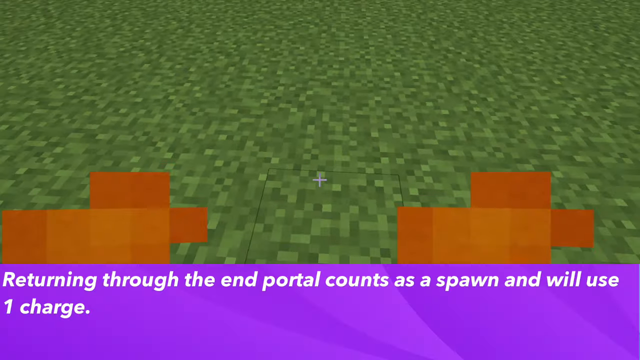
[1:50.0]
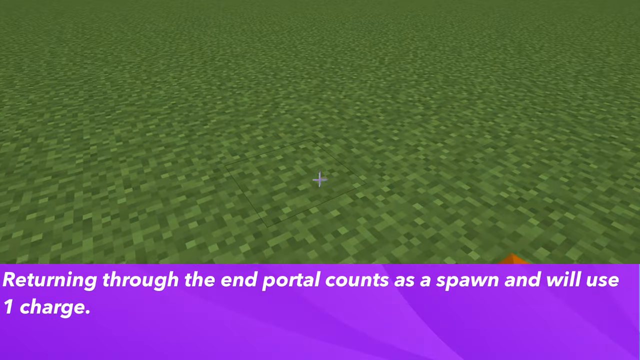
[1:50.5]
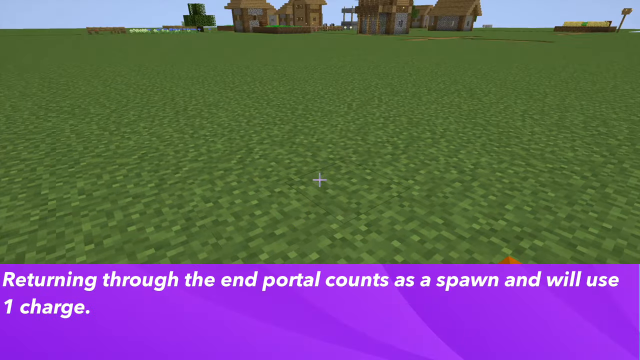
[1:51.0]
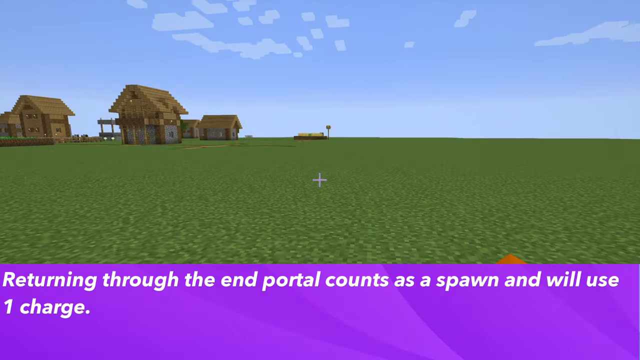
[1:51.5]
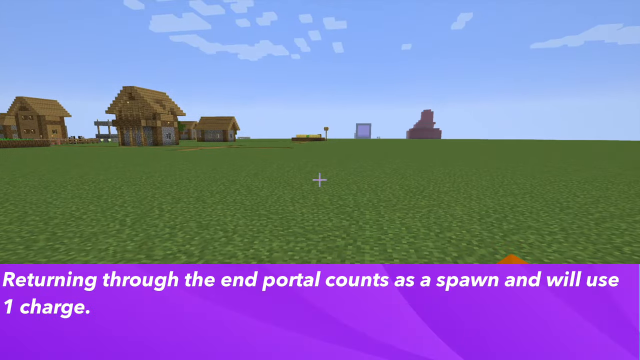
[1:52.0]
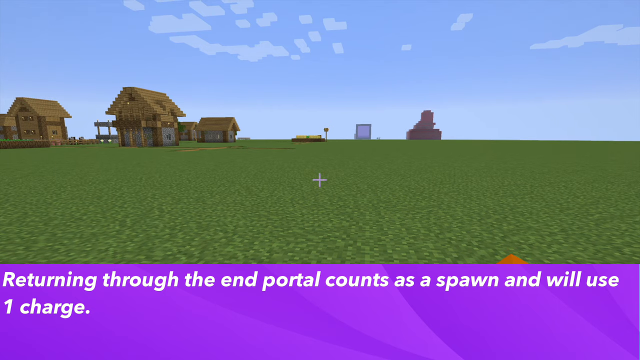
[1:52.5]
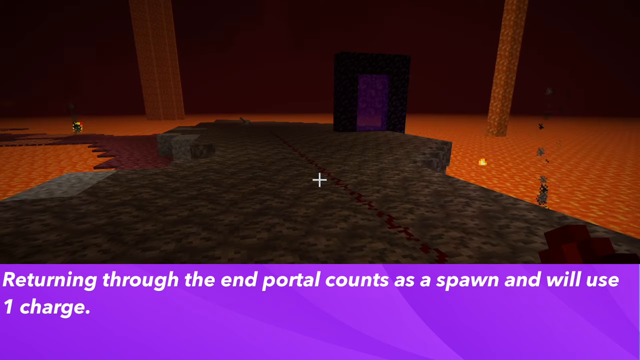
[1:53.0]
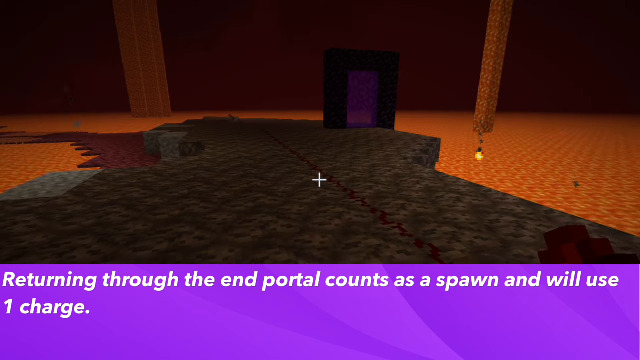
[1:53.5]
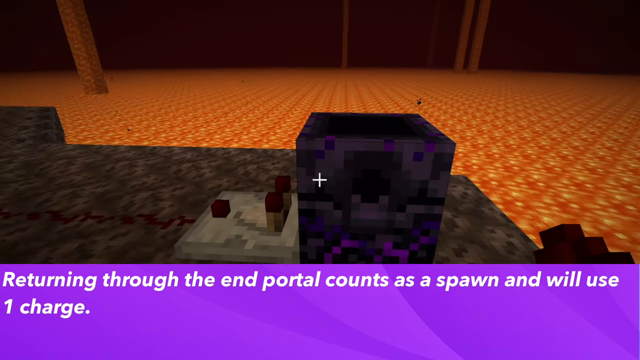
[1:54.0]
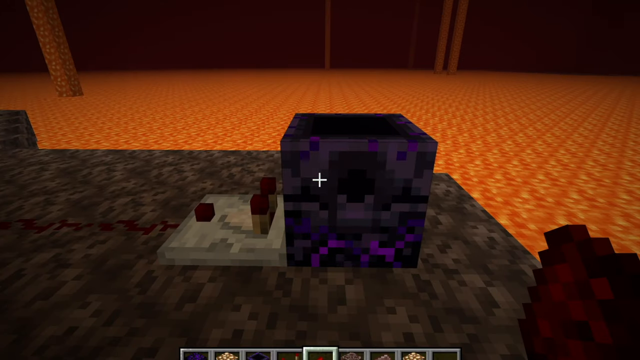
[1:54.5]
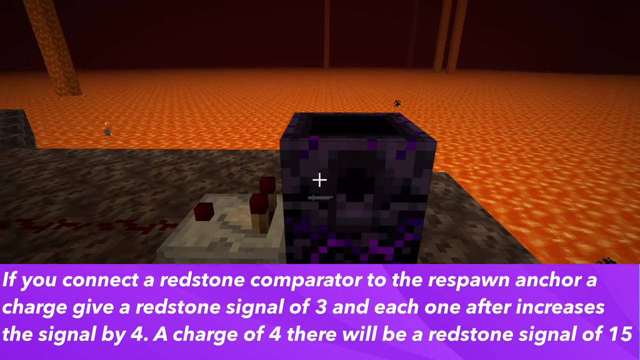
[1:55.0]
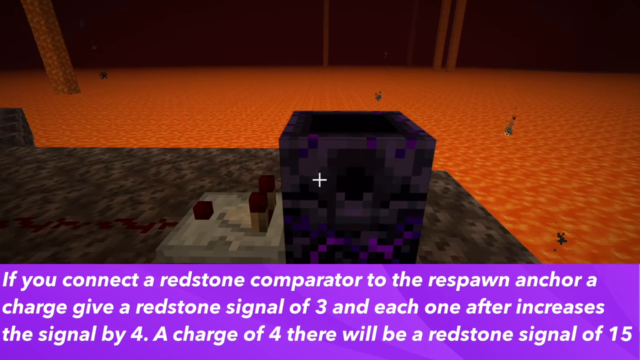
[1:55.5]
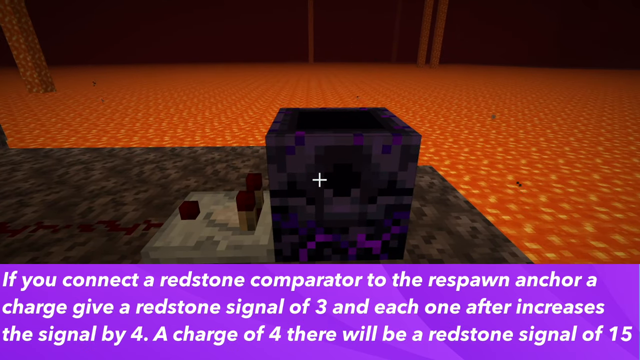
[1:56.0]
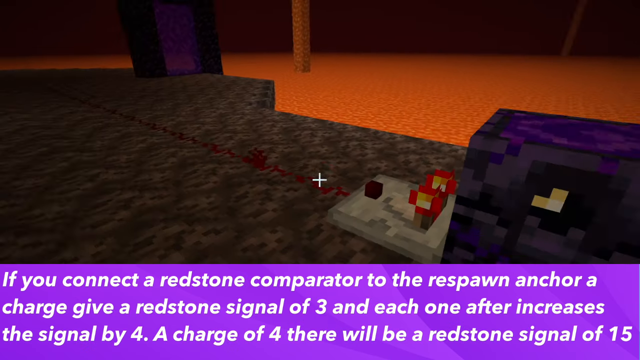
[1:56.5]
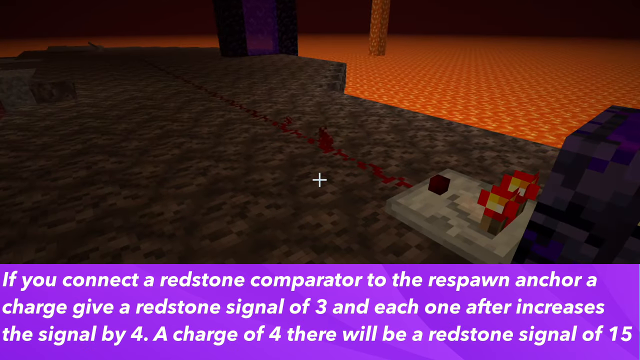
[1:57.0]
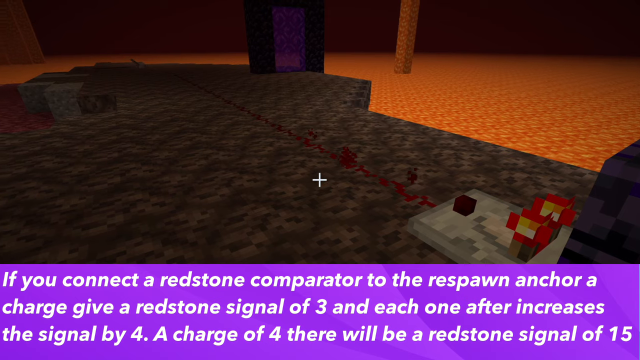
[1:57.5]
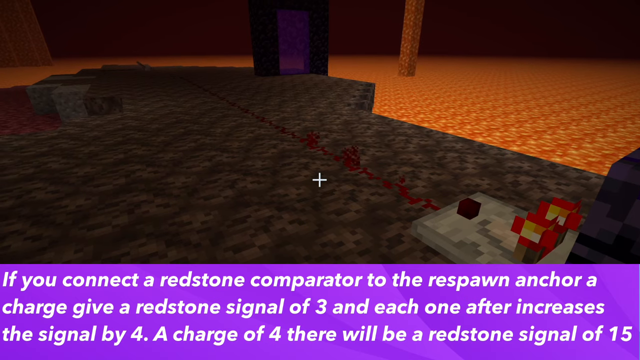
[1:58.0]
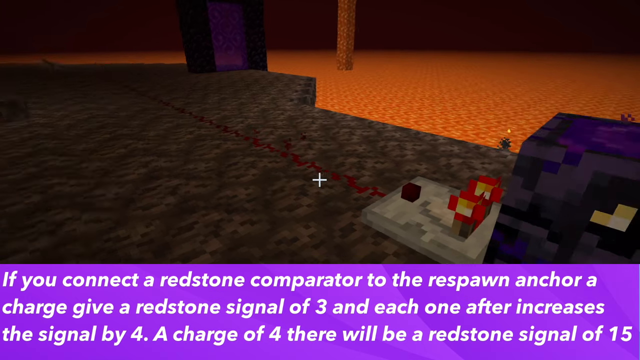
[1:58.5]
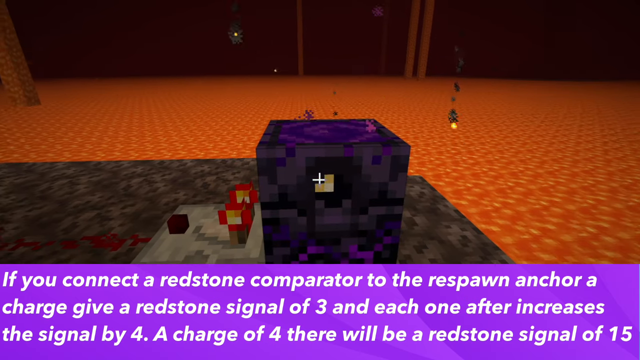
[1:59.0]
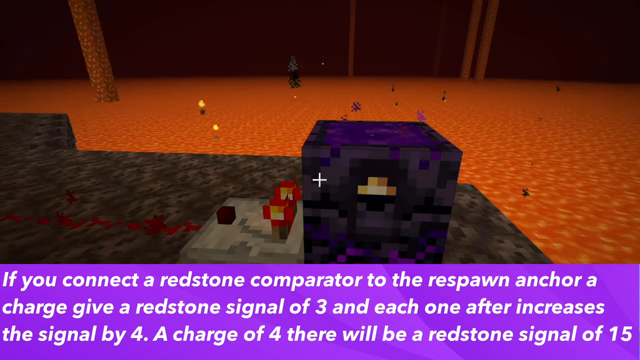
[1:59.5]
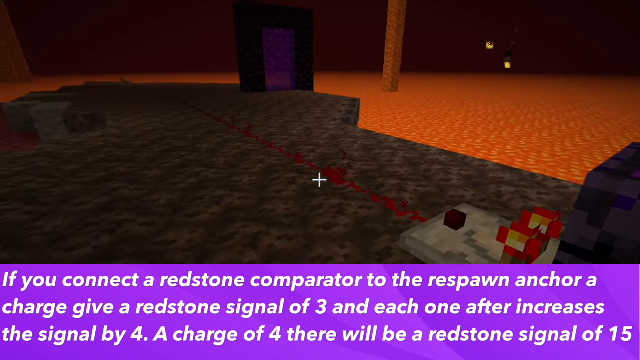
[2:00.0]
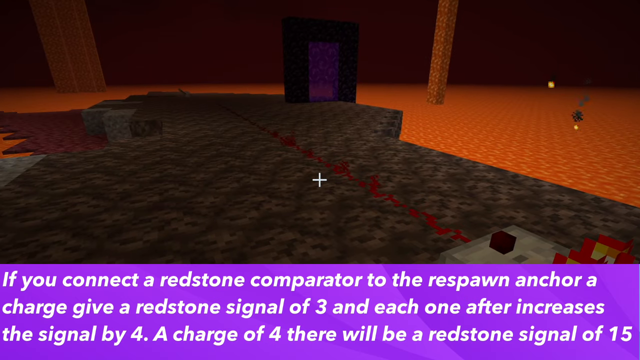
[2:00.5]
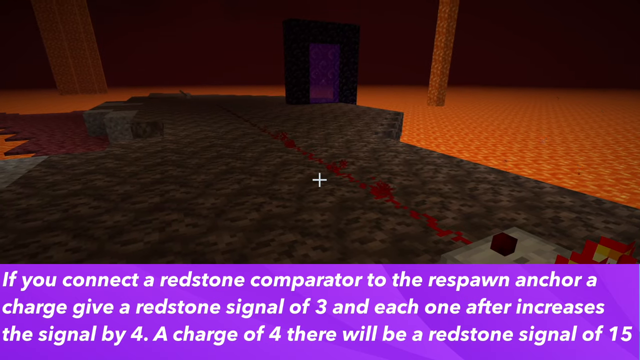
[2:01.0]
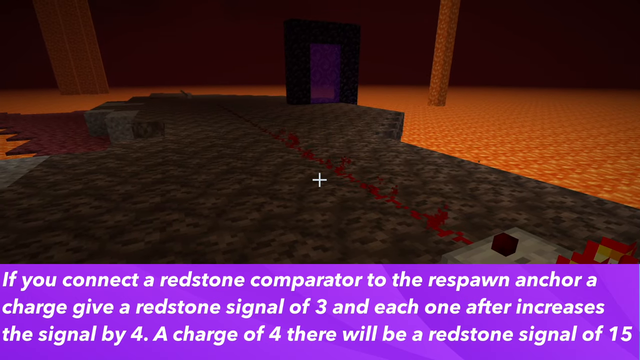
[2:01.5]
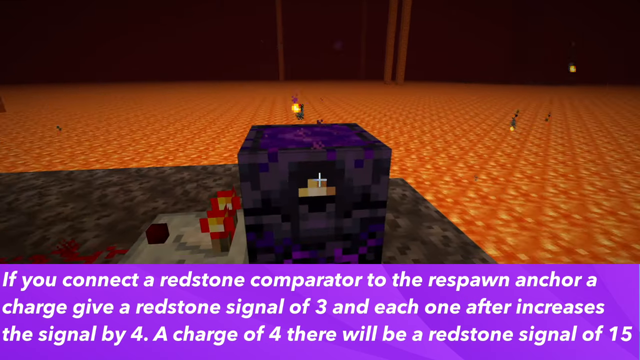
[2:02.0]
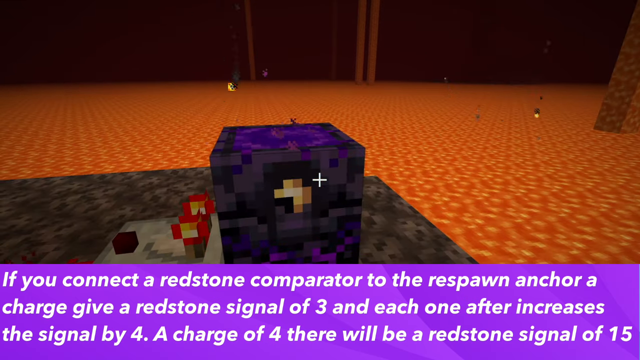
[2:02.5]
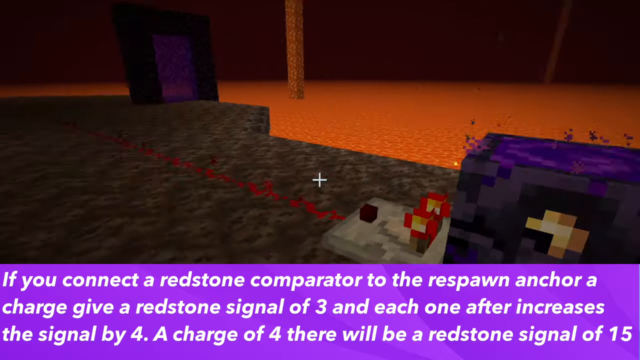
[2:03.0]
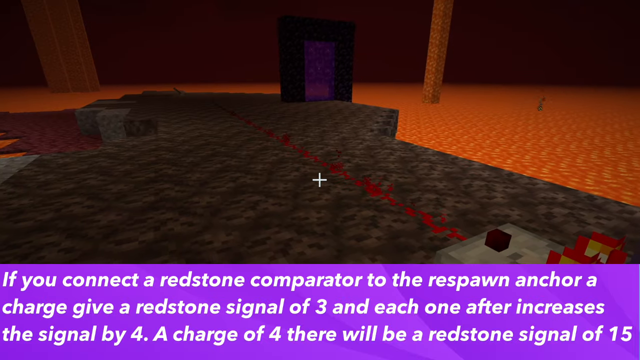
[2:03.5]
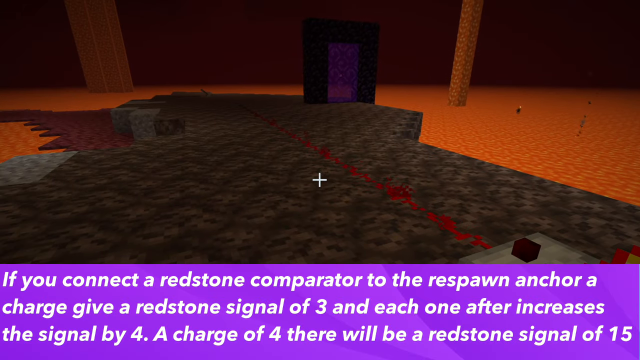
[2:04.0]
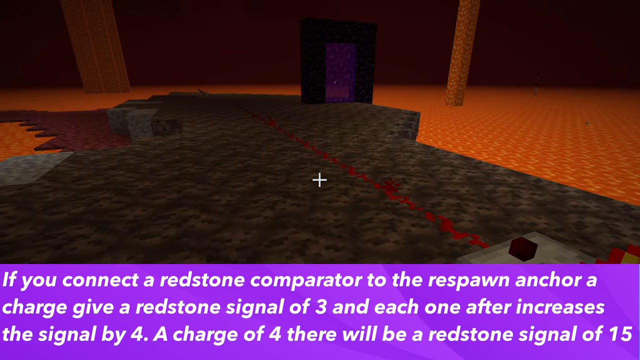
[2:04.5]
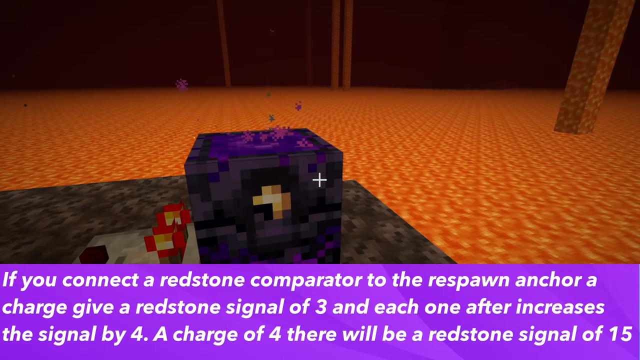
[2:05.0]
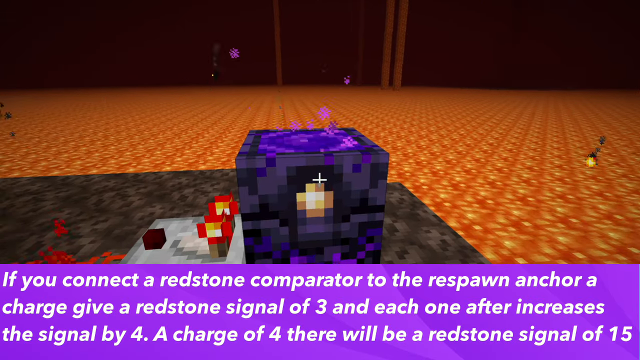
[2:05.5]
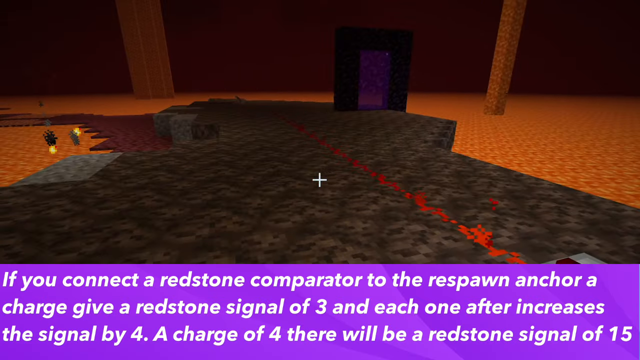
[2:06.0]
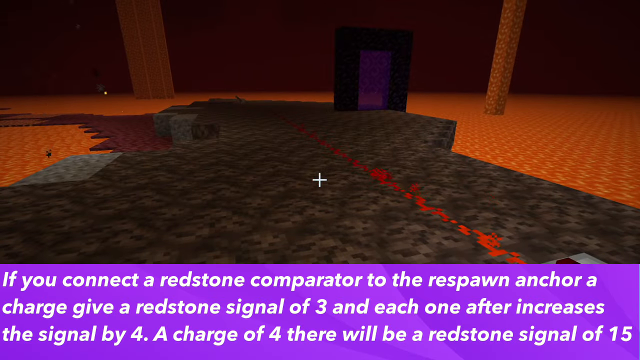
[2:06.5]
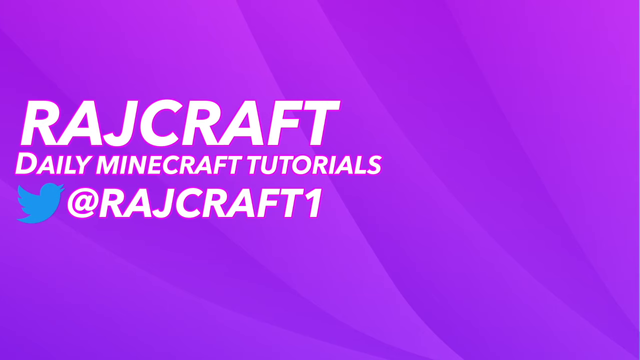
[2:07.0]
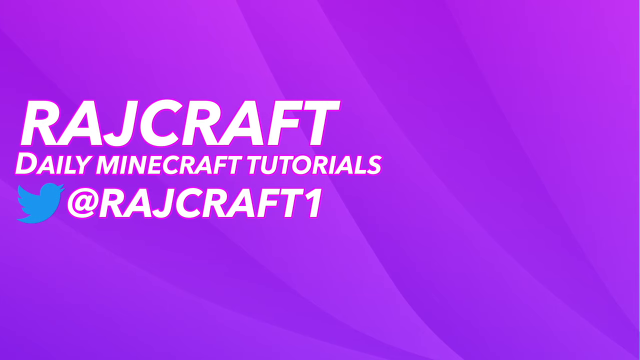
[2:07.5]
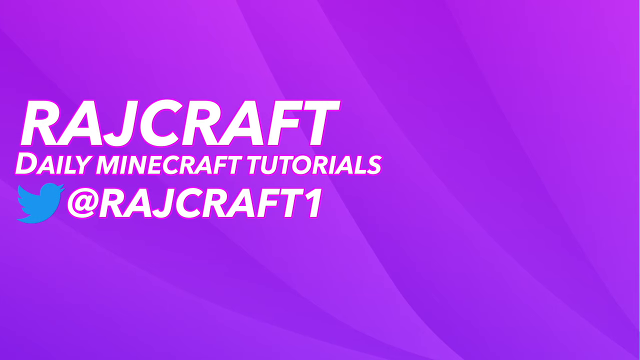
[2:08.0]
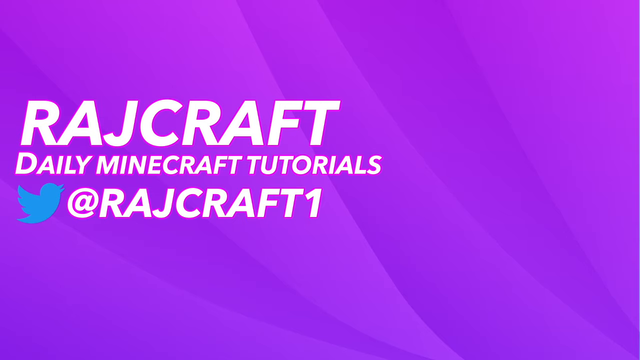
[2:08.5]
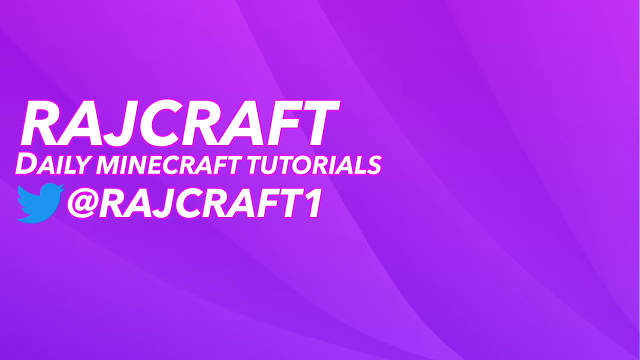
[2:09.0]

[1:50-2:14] On-screen text reads "Returning through the end portal counts as a spawn and will use one charge." Another quick scene in a pasture appears. Text reads "If you connect a redstone comparator to the respawn anchor" and states that a charge of four gives "a redstone signal of 15." The text "Raj craft daily minecraft tutorials" appears, showing this is a Minecraft tutorial.